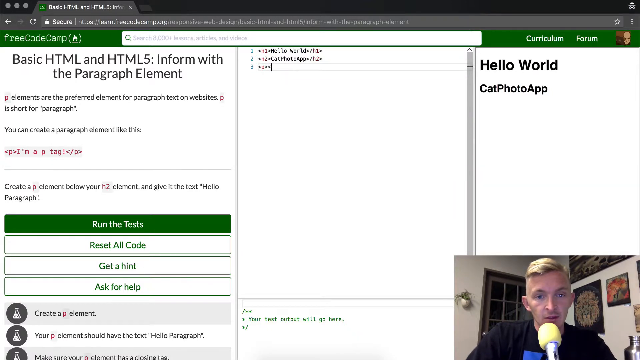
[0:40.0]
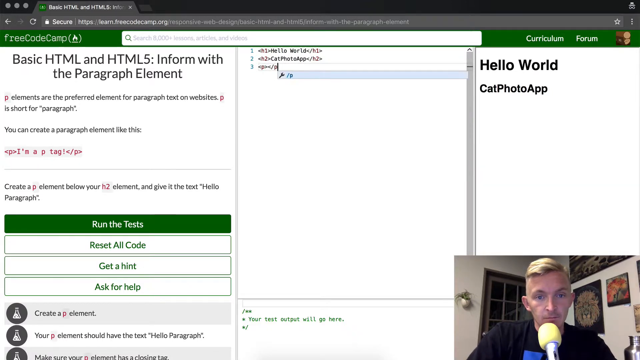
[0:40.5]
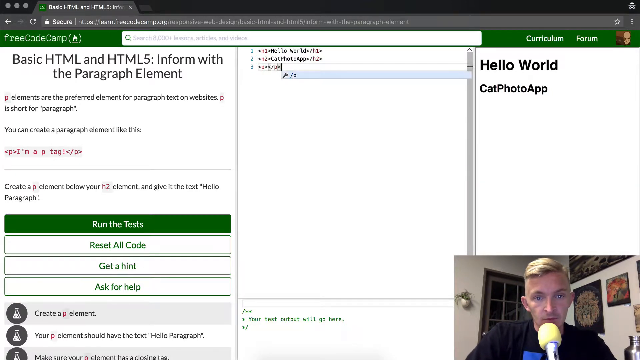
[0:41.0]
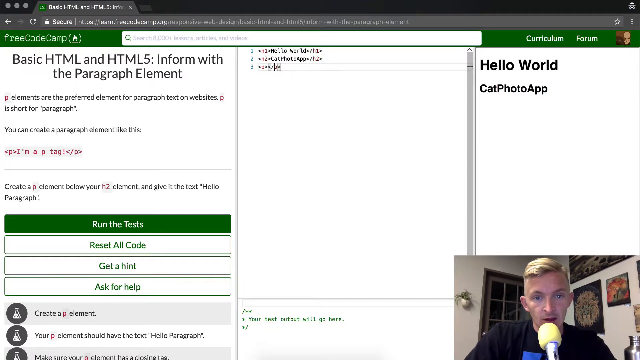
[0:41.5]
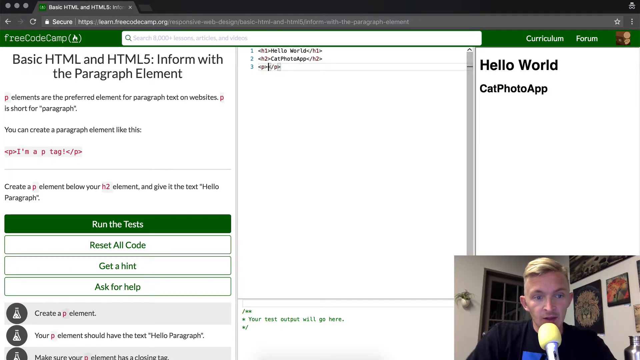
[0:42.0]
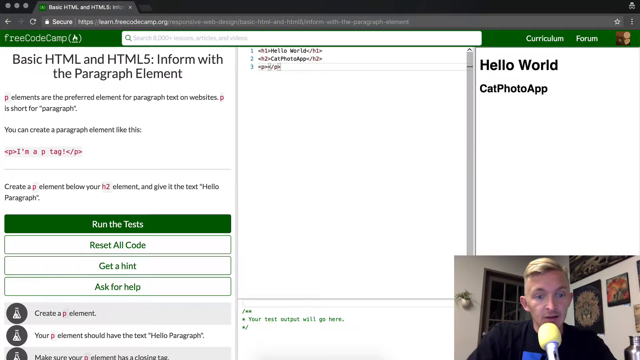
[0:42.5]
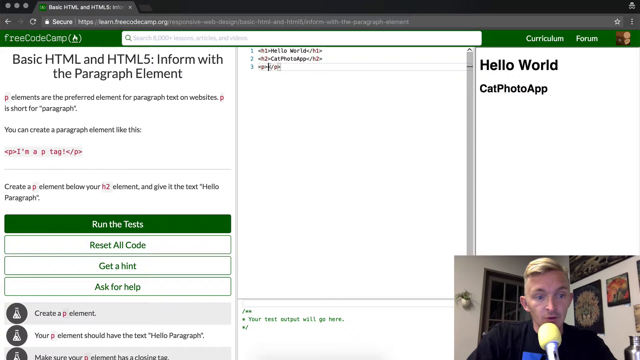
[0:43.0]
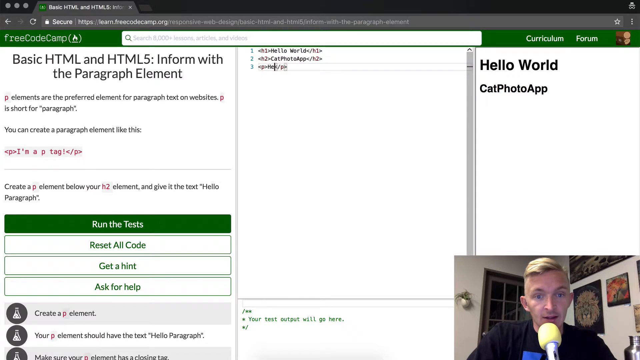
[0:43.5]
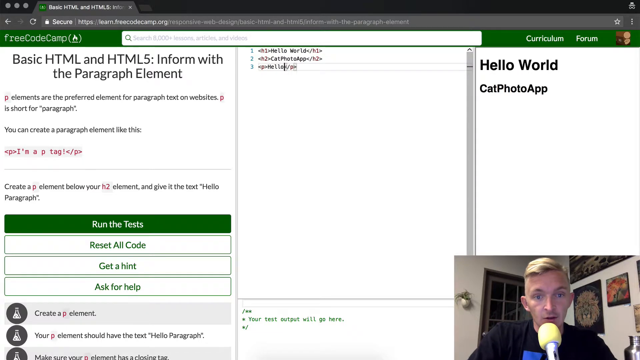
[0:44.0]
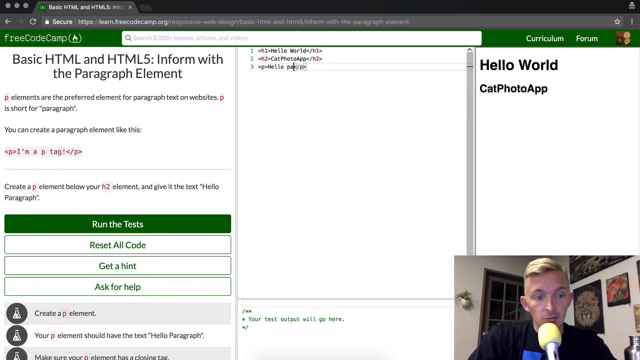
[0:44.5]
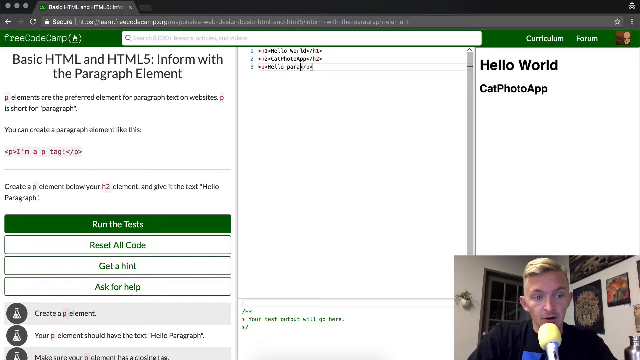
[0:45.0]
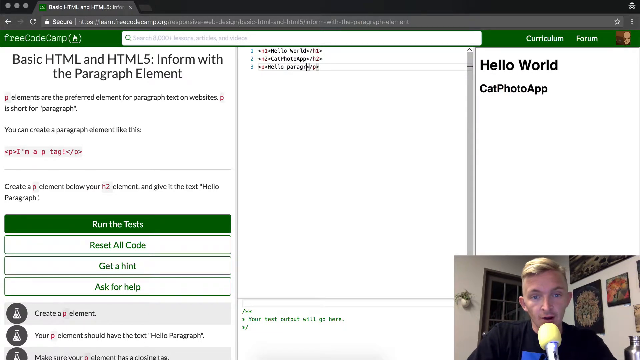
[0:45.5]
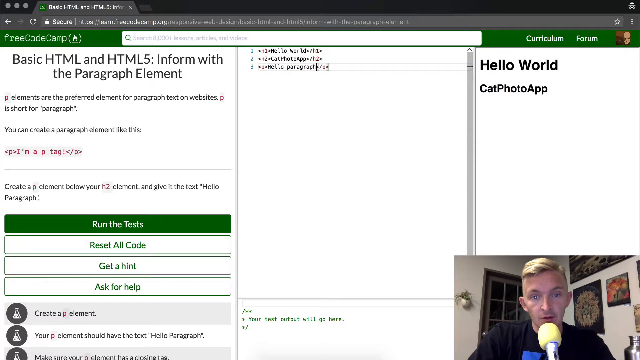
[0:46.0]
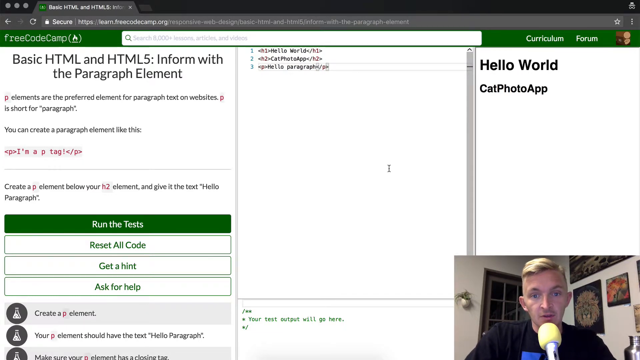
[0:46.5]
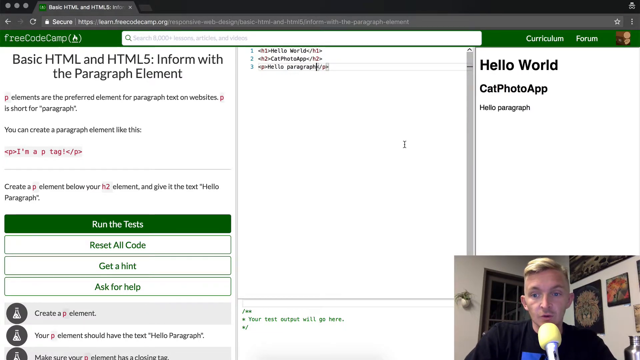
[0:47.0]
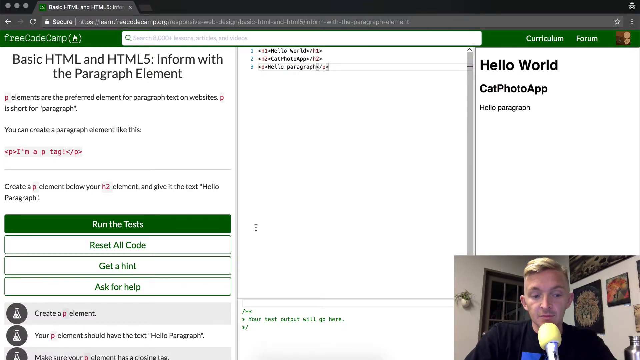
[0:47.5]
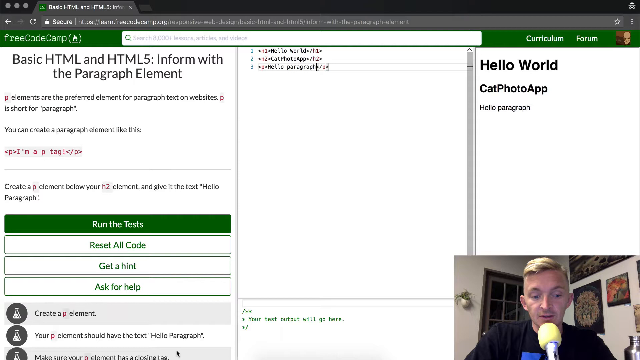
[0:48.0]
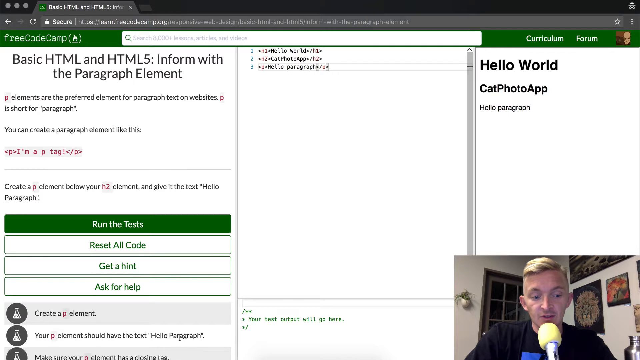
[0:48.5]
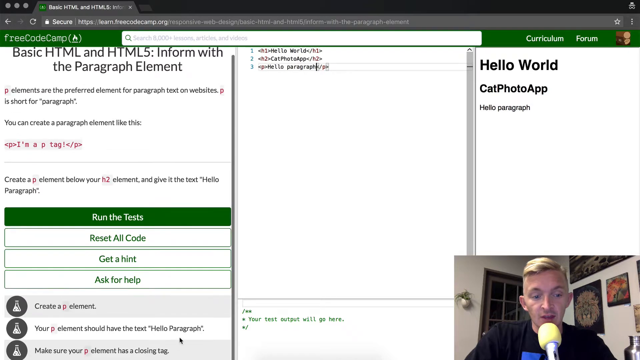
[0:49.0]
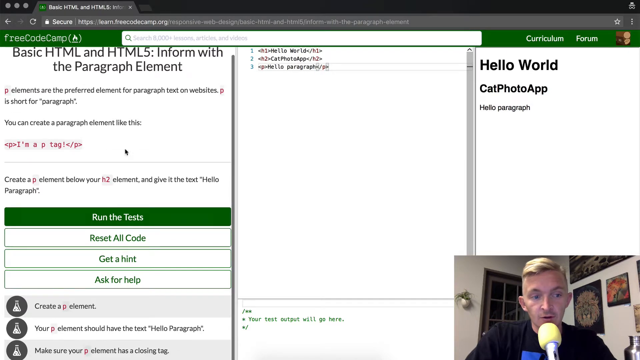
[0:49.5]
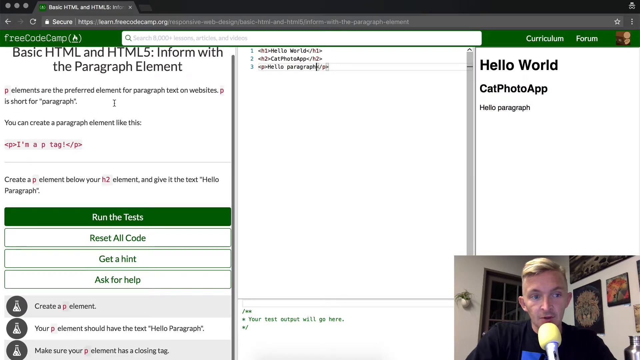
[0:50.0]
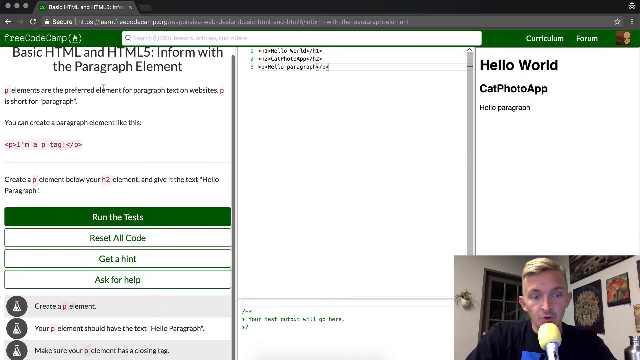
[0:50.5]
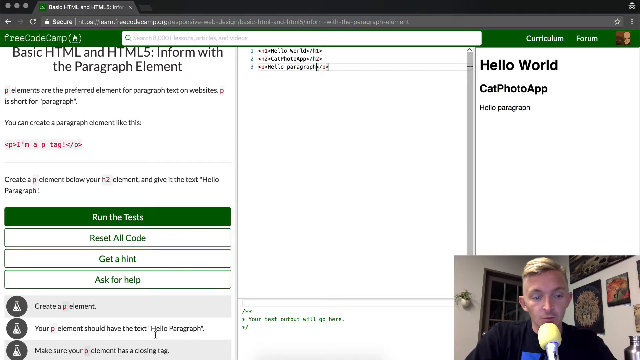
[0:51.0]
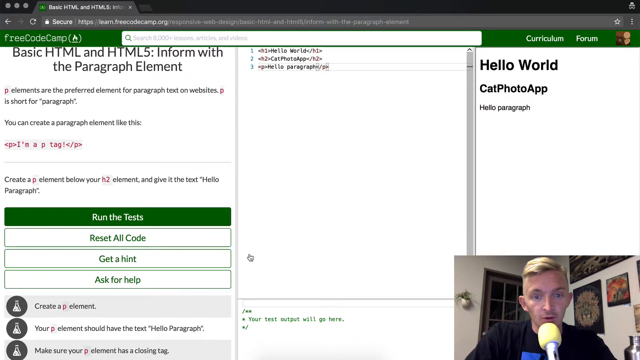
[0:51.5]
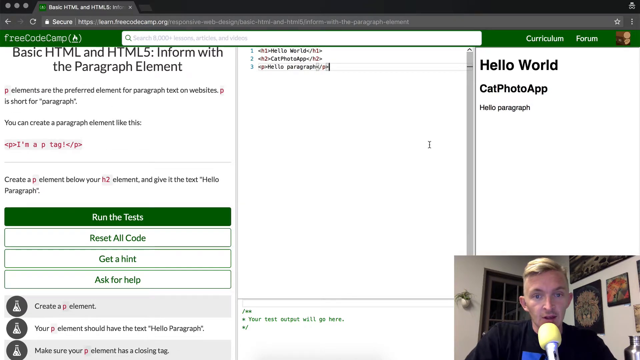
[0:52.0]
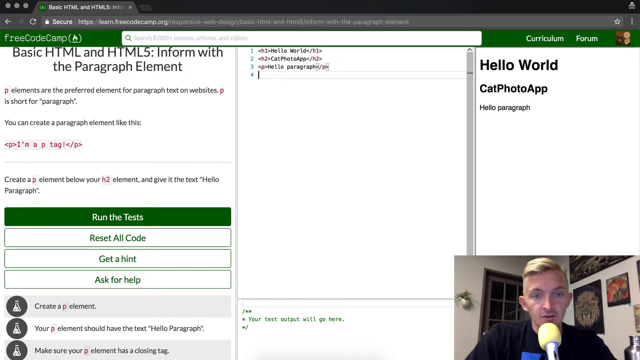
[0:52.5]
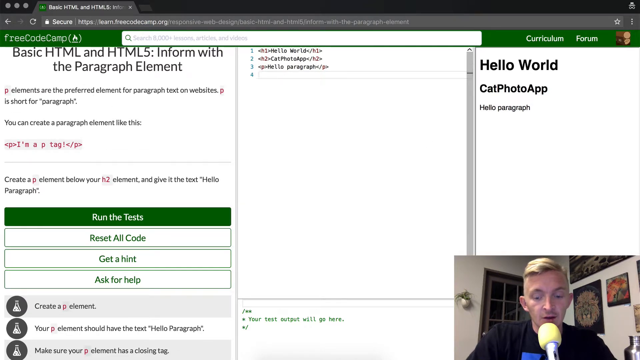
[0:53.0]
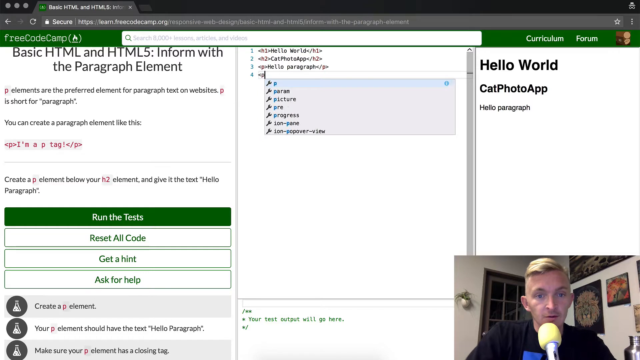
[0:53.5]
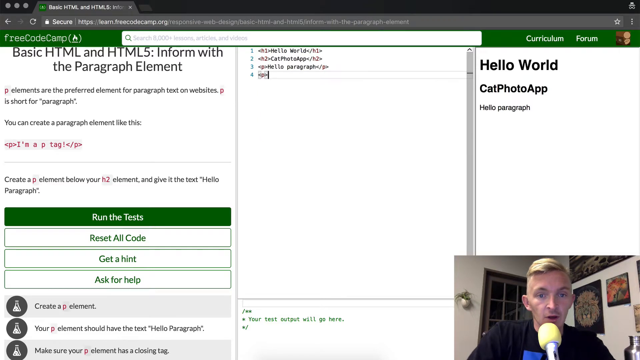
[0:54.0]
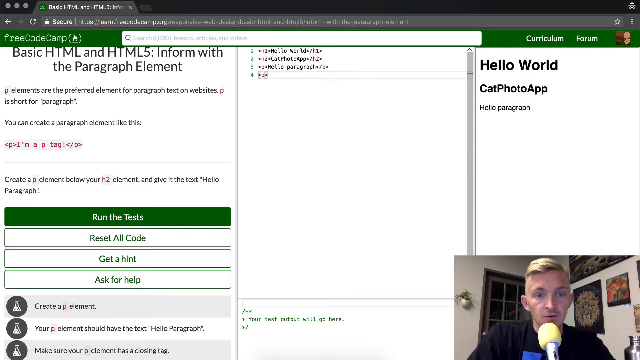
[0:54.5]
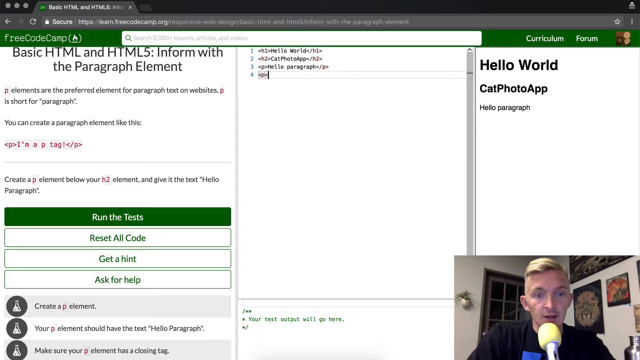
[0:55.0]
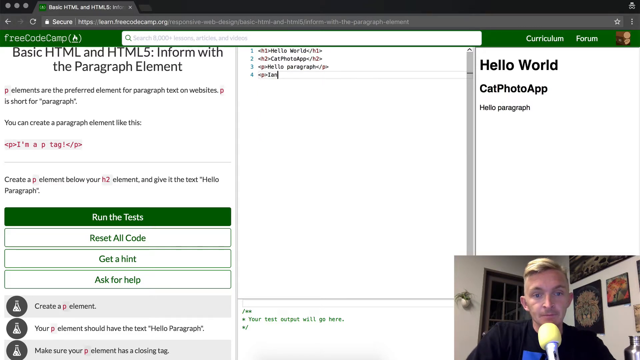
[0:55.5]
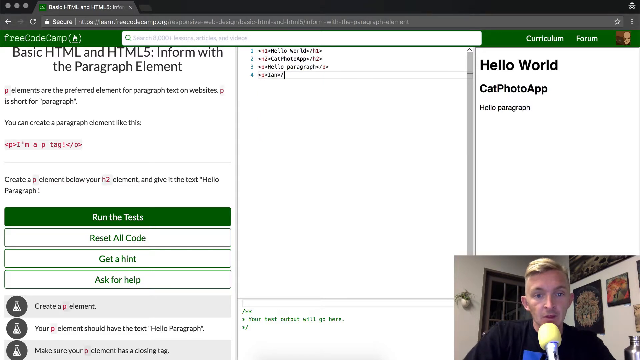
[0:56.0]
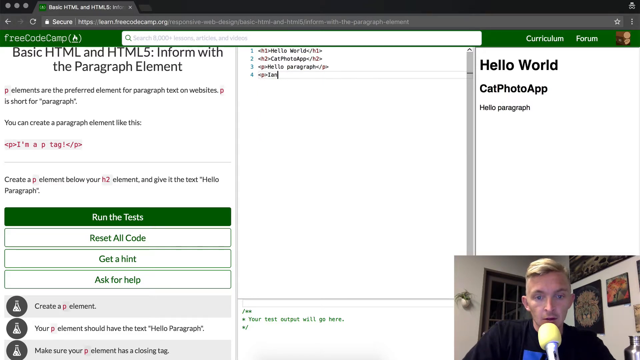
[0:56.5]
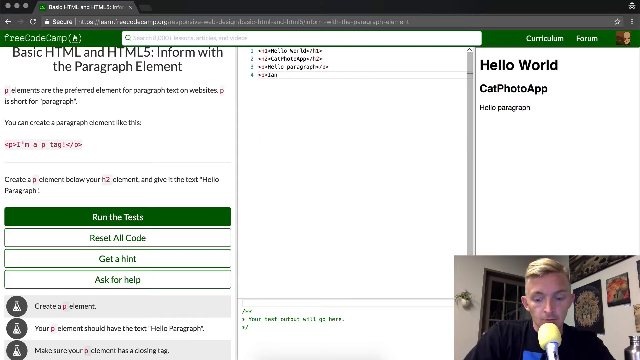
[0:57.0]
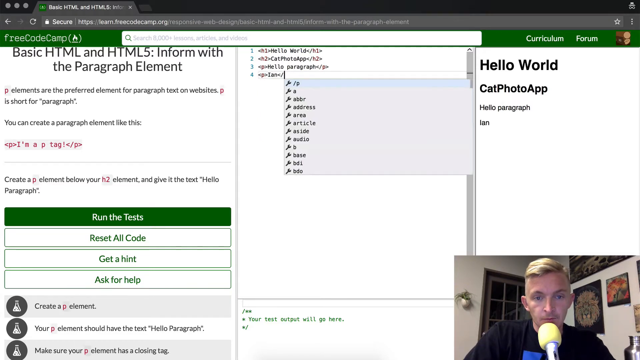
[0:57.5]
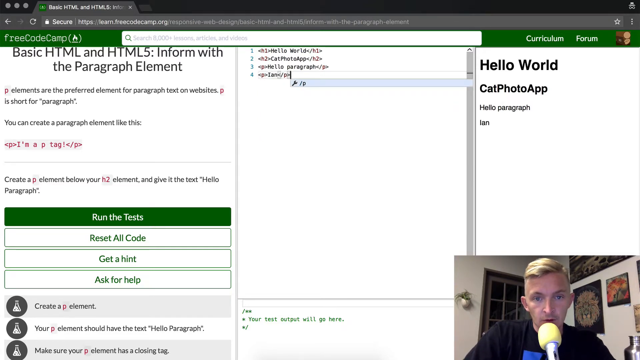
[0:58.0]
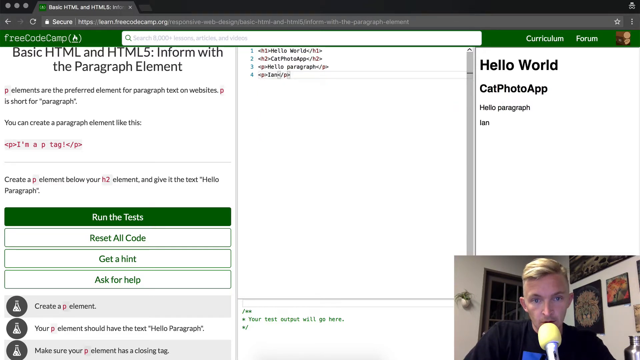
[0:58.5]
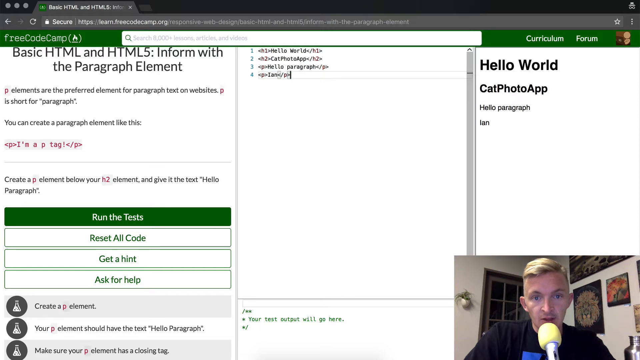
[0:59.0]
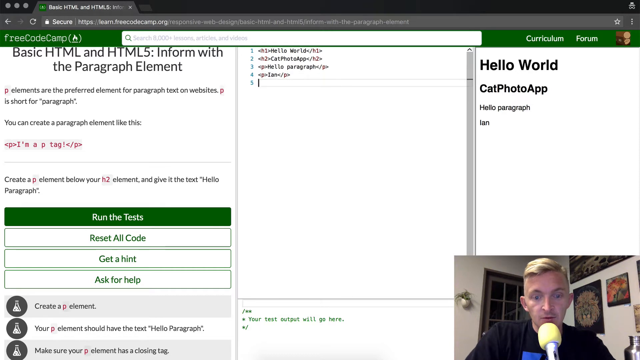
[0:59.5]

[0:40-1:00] The same website information is still on screen. The man is white, with short blonde hair, and has a yellow microphone. He appears to be talking about the page, the Free Code Camp website. Text on the page refers to HTML and HTML5 and paragraph elements. The site offers free lessons or courses, and finishing all five earns a certificate. The page shows the test and reset options, along with getting a hint and asking for help. He looks like he is typing on the screen: a mouse cursor is visible, and words keep appearing, indicating something is being typed.